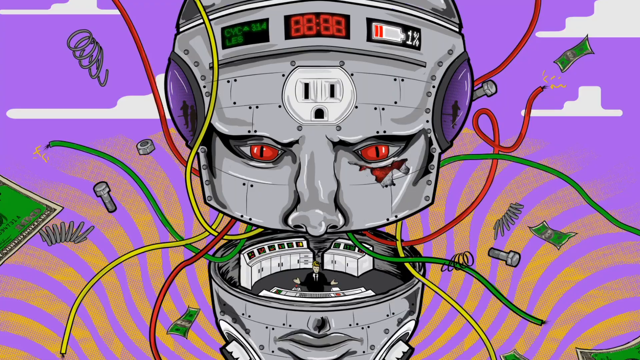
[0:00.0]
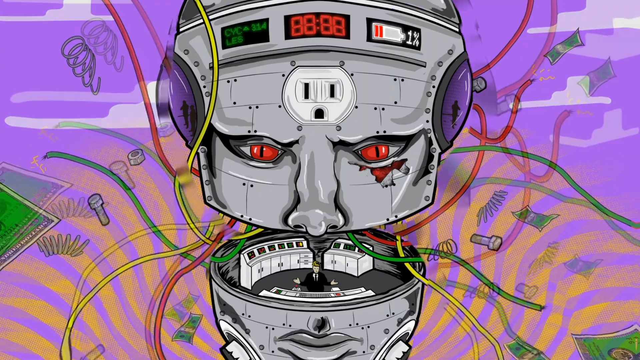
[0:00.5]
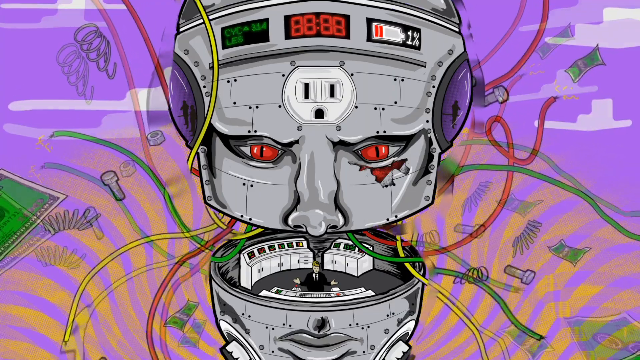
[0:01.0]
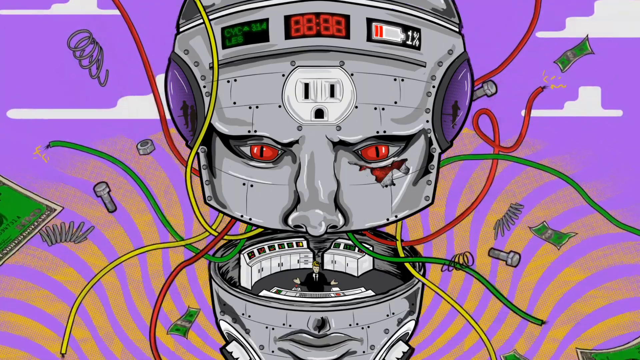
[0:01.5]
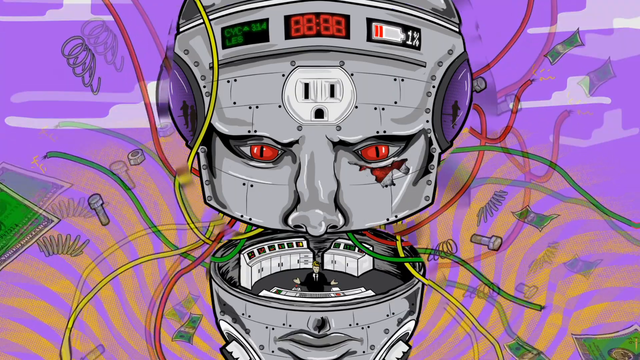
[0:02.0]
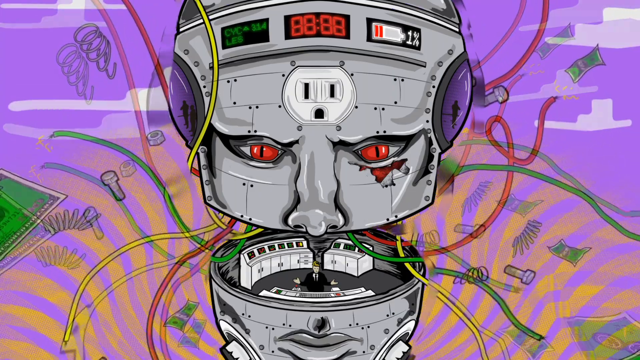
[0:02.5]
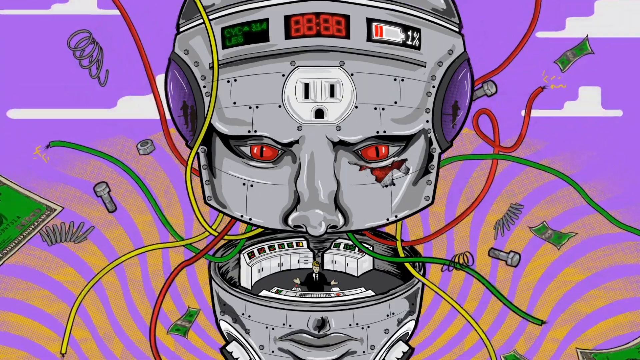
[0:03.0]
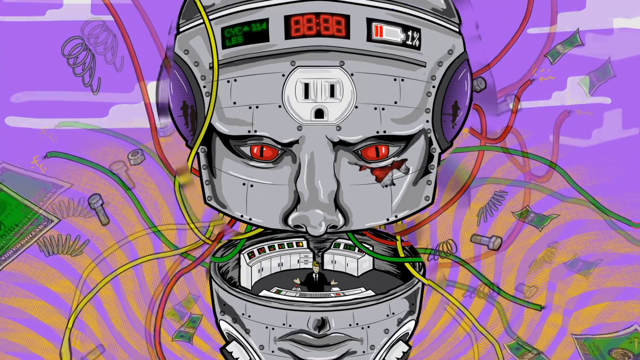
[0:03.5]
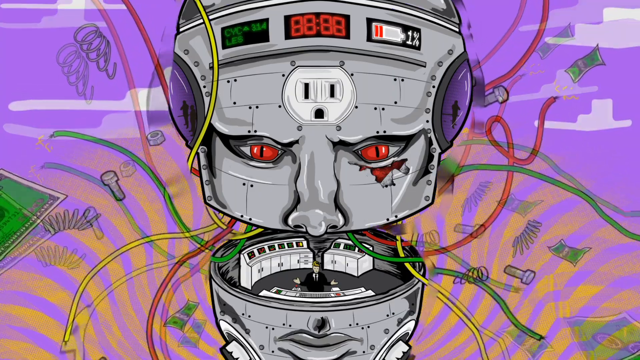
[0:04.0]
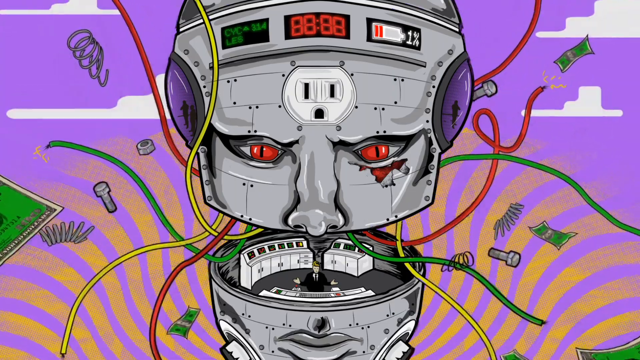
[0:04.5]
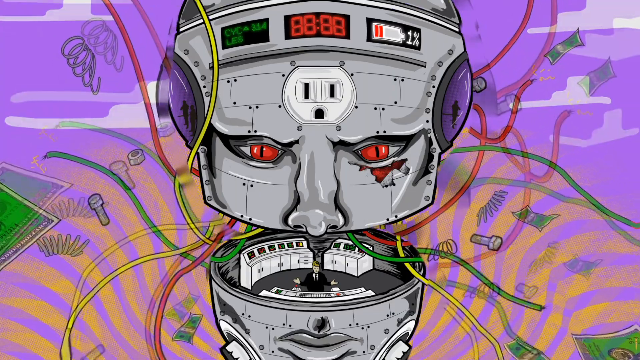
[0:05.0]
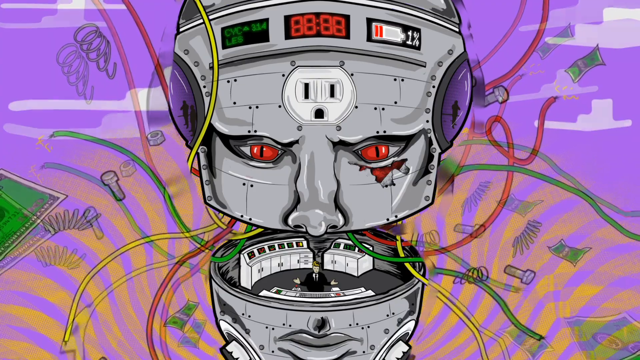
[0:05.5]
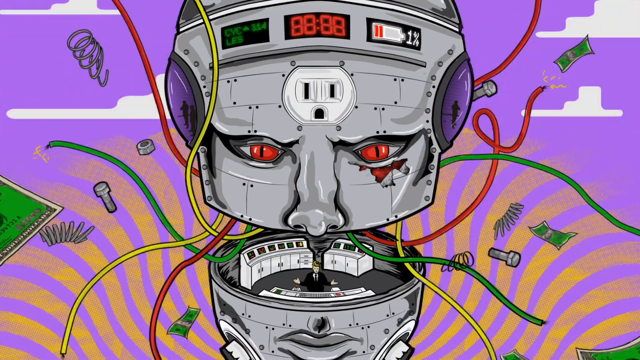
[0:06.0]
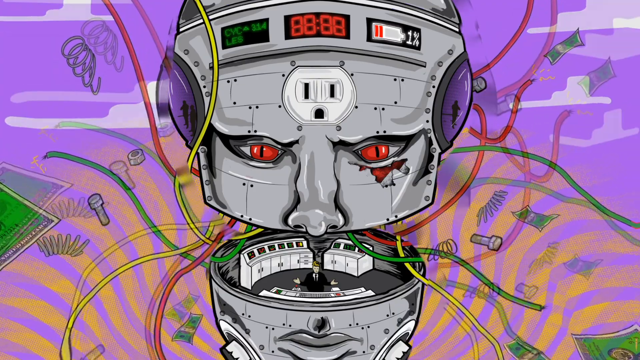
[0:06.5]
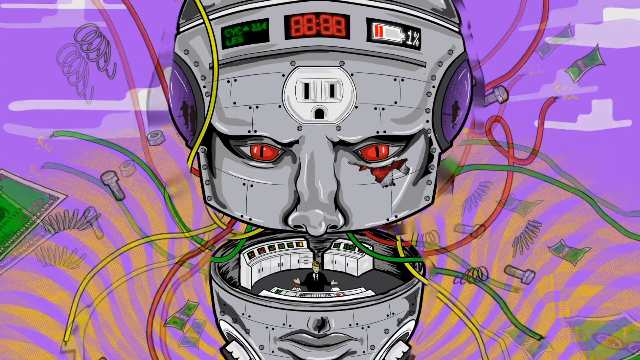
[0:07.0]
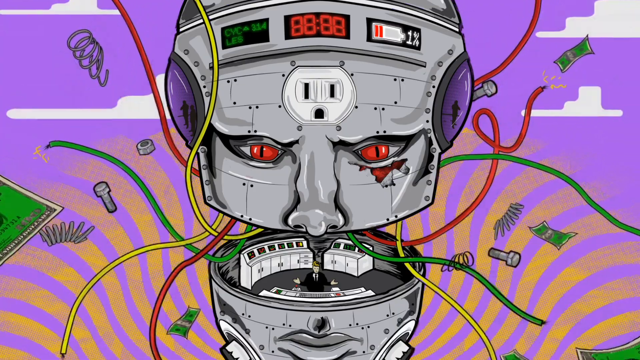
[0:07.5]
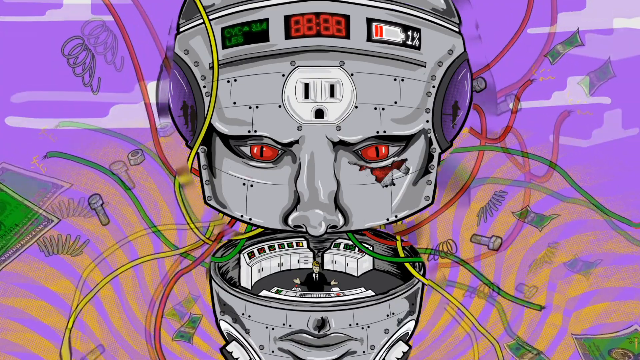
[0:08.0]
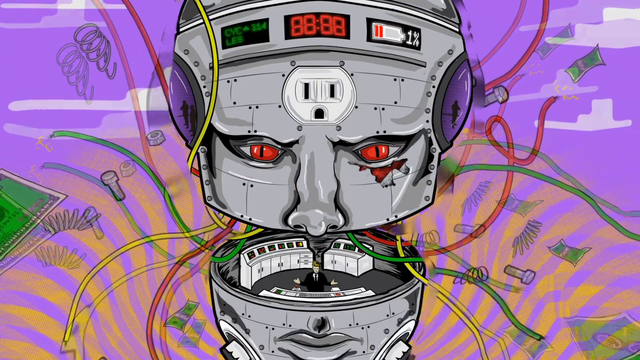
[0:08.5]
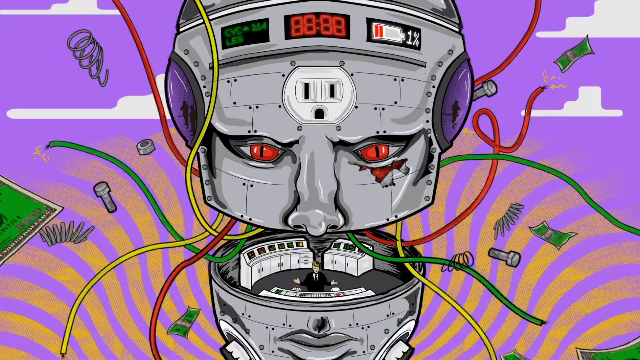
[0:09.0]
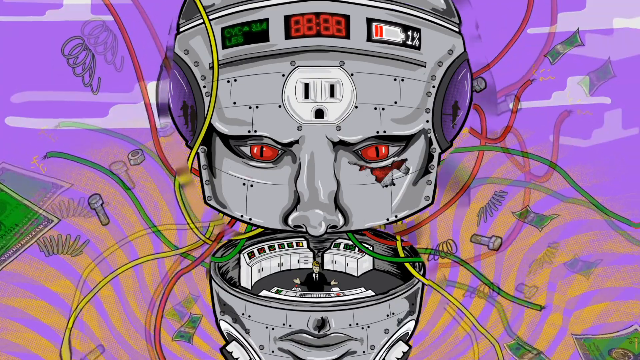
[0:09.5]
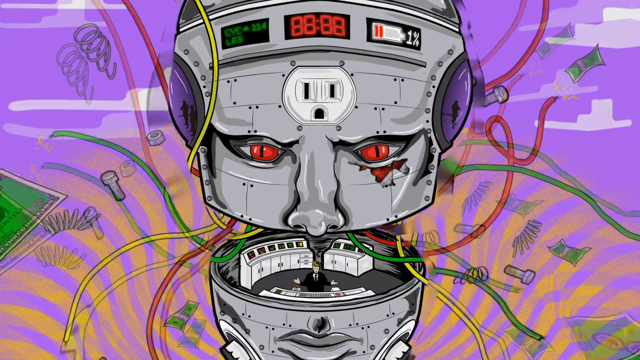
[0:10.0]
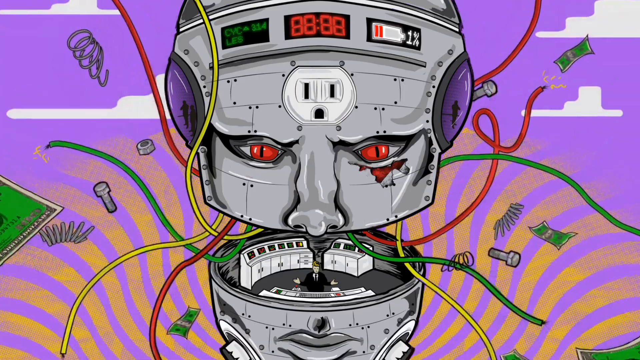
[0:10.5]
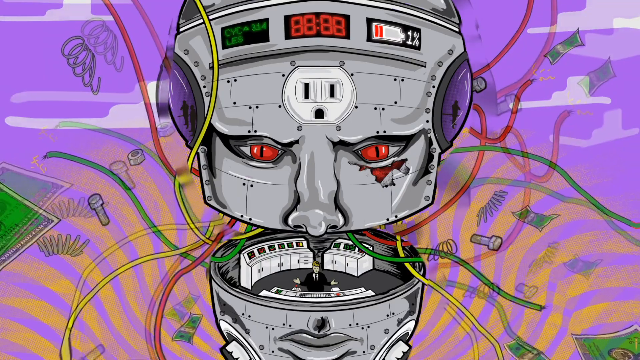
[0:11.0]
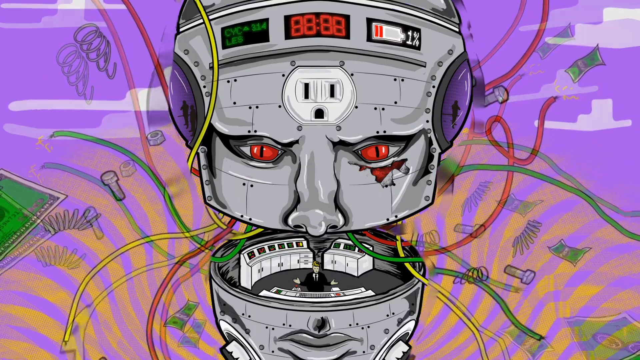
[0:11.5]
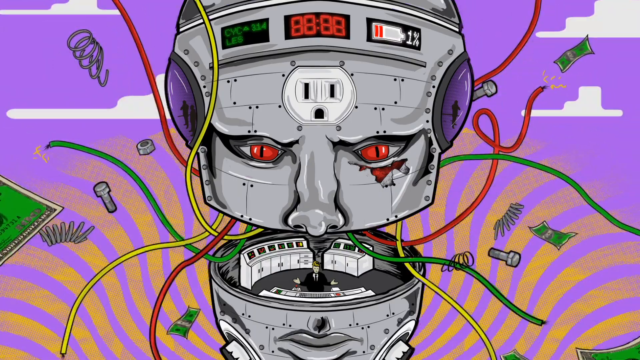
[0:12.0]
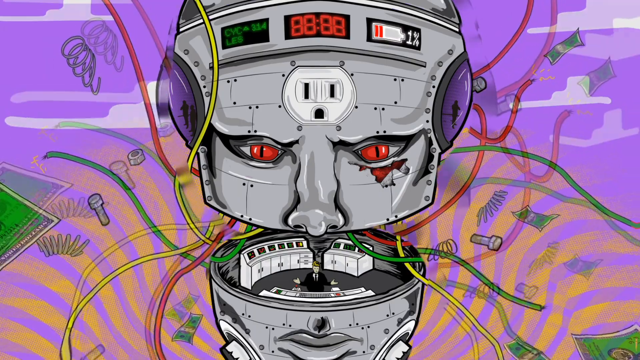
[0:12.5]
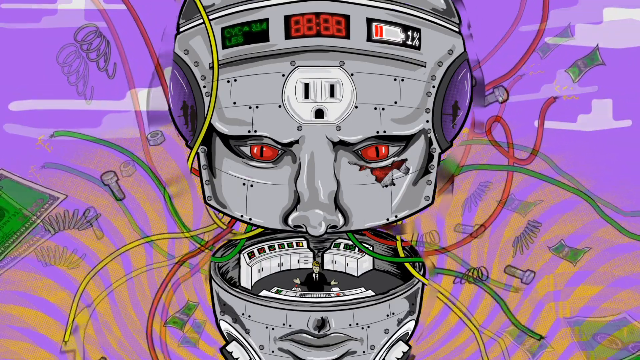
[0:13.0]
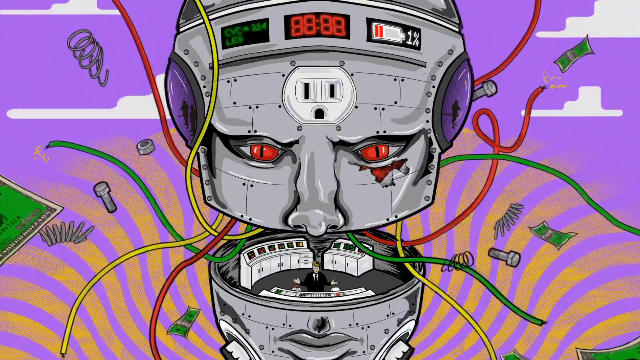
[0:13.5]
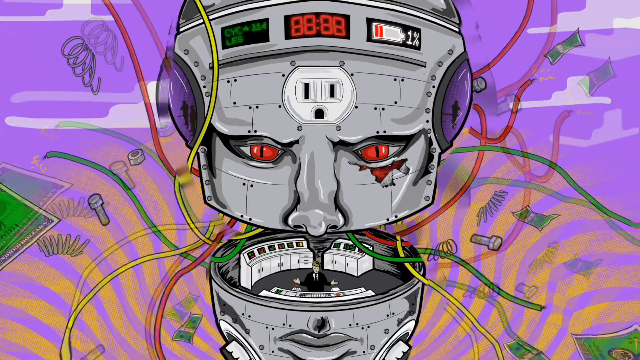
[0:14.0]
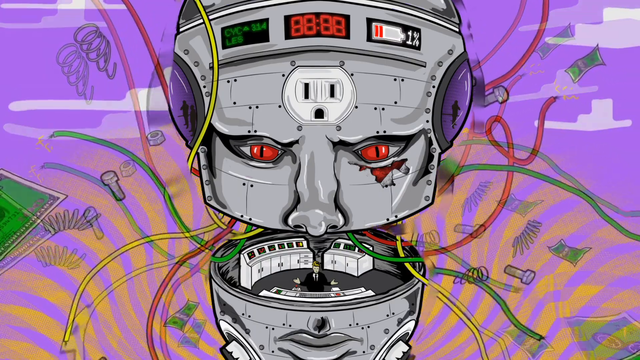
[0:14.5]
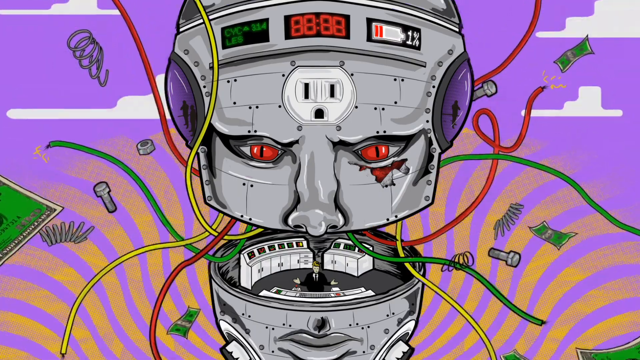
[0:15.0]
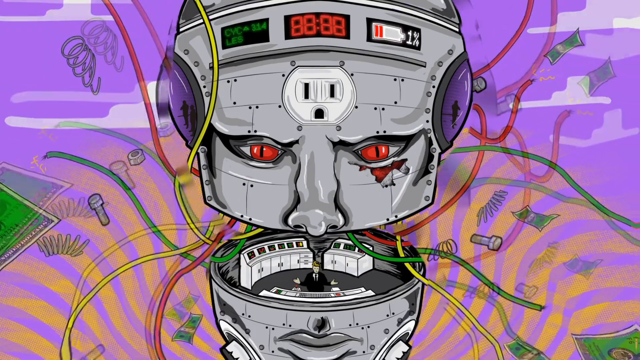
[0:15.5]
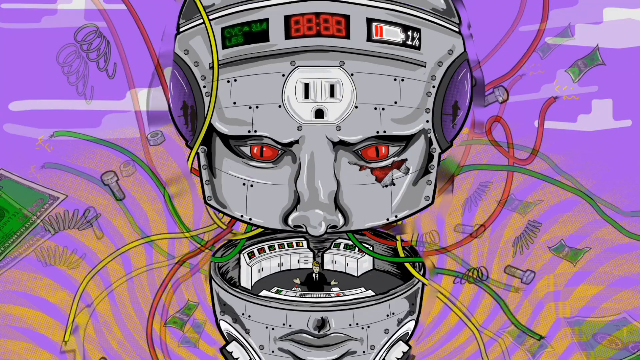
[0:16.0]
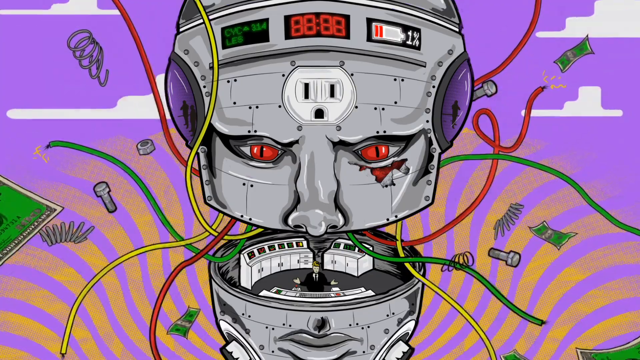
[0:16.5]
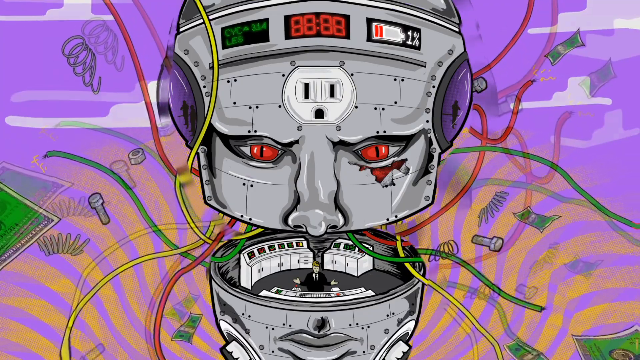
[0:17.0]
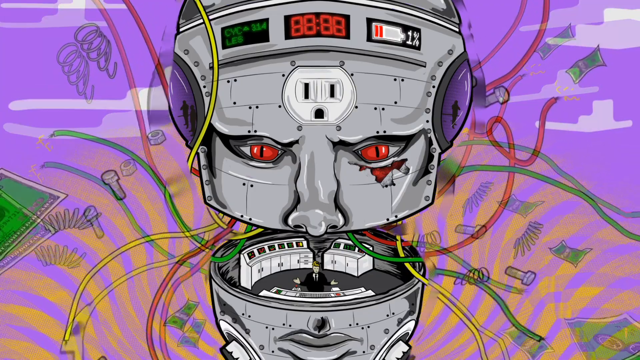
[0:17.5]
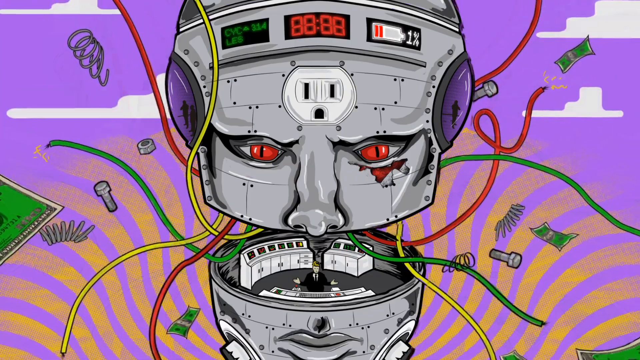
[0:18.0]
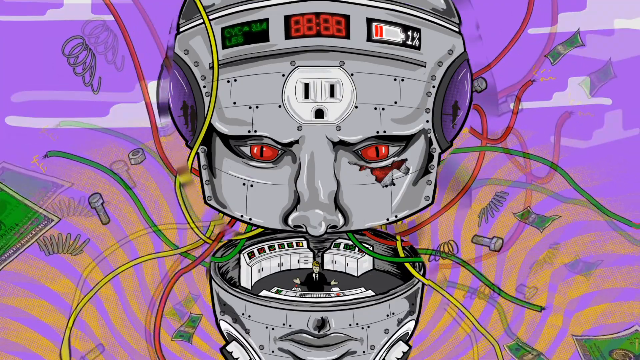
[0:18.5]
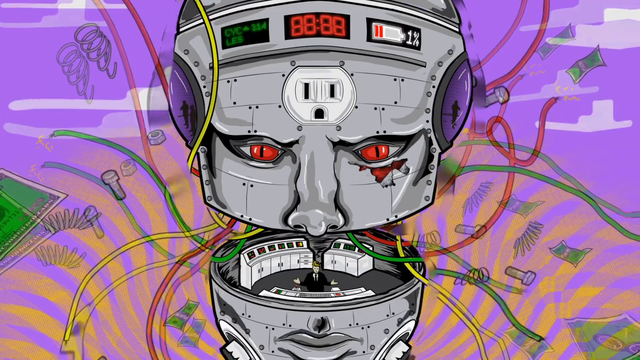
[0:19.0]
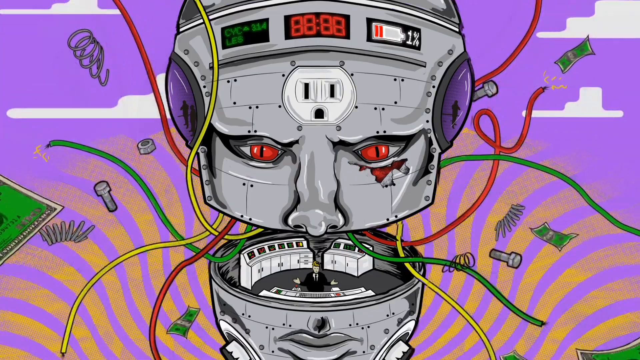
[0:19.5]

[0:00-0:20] A cartoon appears to show a control room built into the head of a giant robot. An American-style outlet is in the middle of the robot's forehead. The robot is gray with red eyes, and there seems to be an injury under the eye on the viewer's right. The nose is shaped with a lump in the middle, and at the top of the head are the numbers "88;88". A battery indicator shows less than 1% power left and reads "314 cycles". A man stands in the control room looking down at a computer control. An animation moves counterclockwise, with springs, bolts and washers floating around, along with what appear to be dollar bills; one dollar bill on the right occasionally floats through and disappears. Red, green and yellow wires stick out of the robot's head, with electricity coming out of their ends.